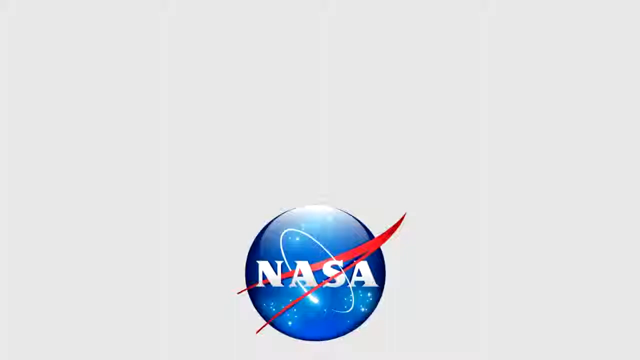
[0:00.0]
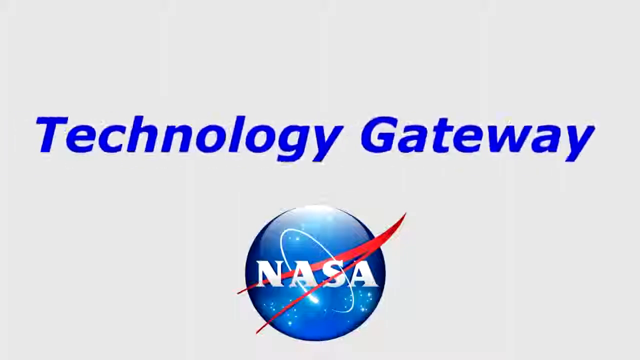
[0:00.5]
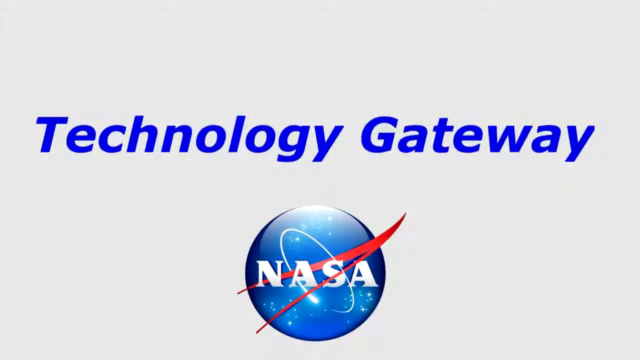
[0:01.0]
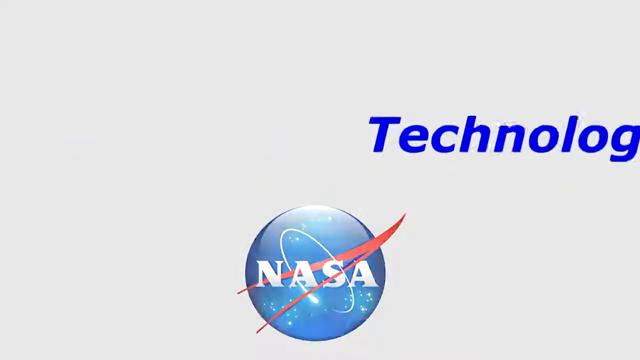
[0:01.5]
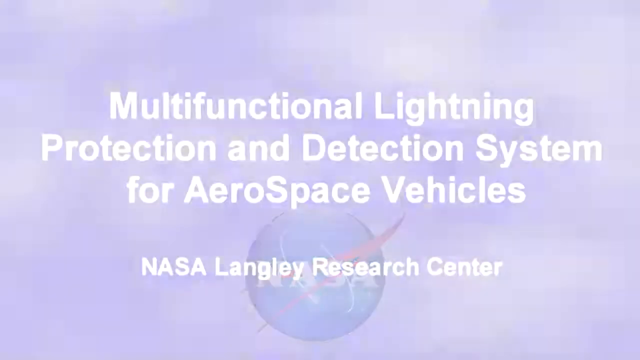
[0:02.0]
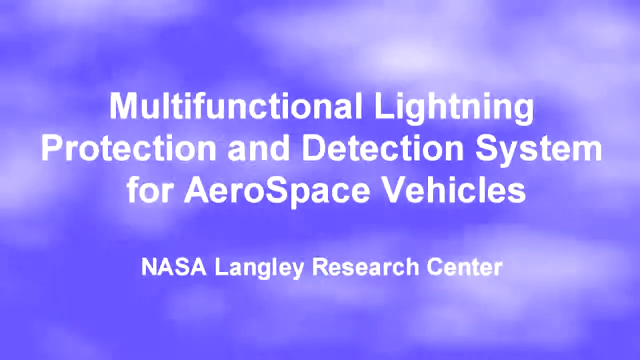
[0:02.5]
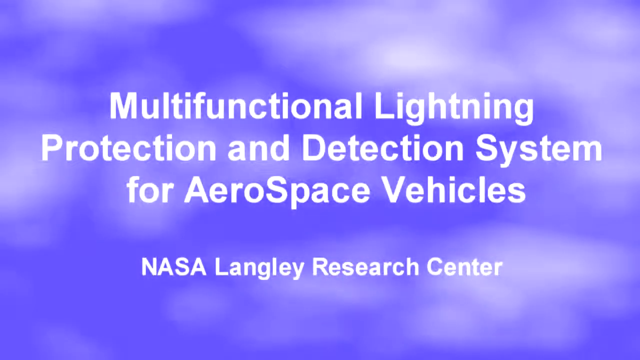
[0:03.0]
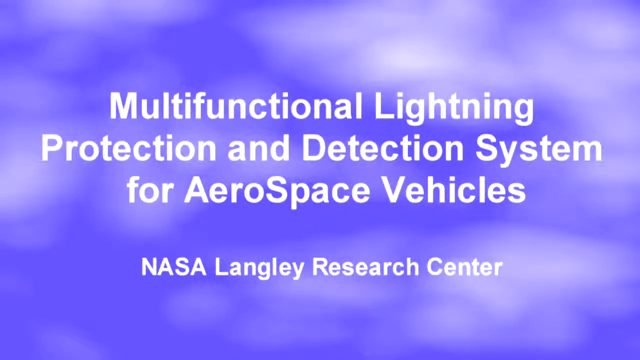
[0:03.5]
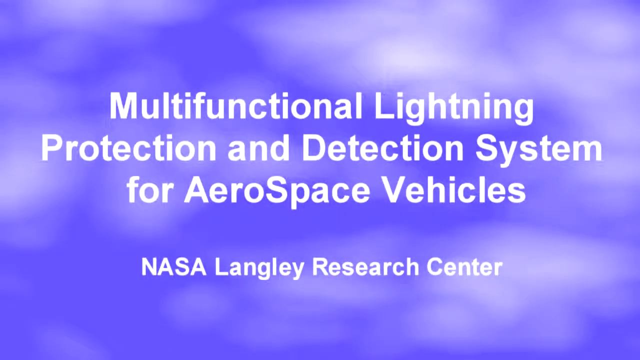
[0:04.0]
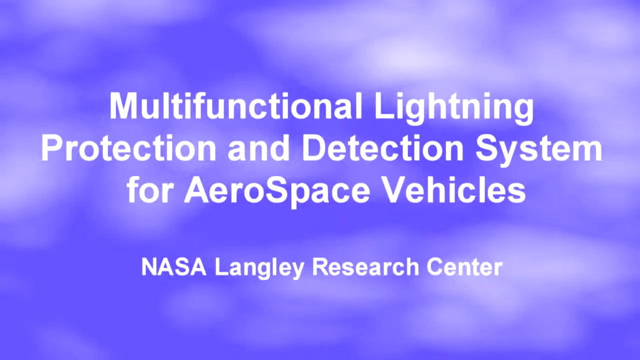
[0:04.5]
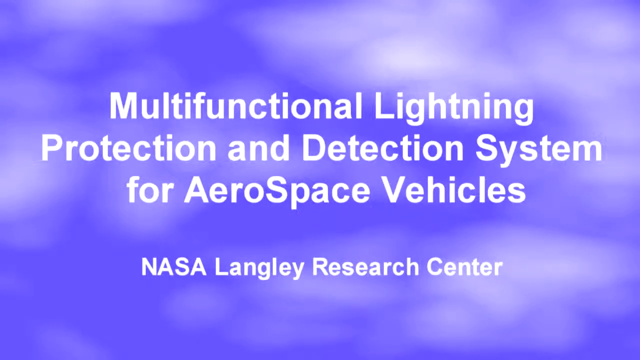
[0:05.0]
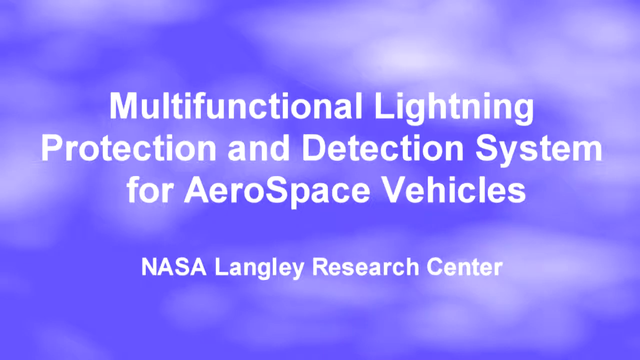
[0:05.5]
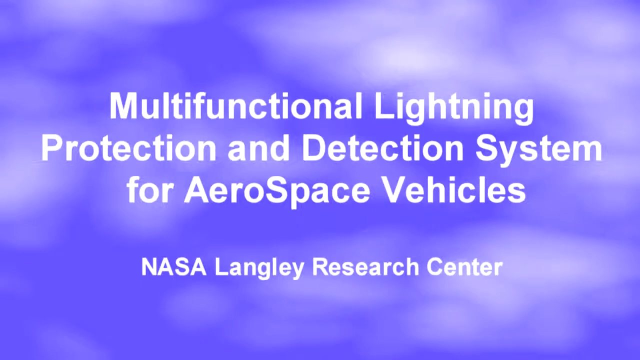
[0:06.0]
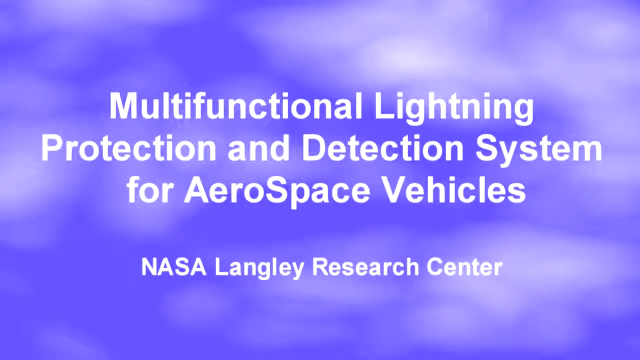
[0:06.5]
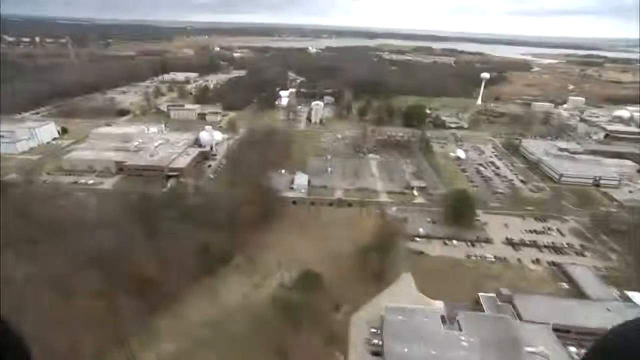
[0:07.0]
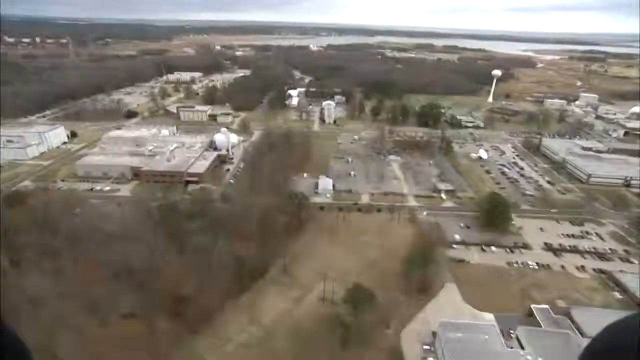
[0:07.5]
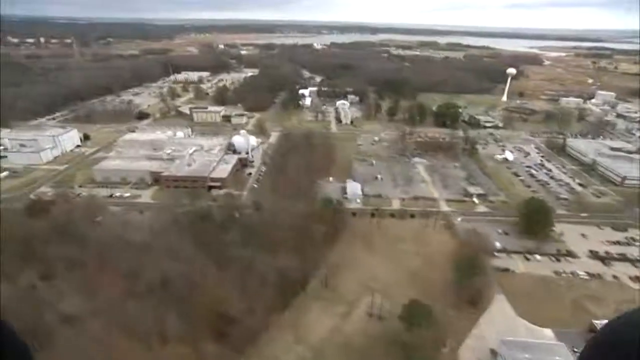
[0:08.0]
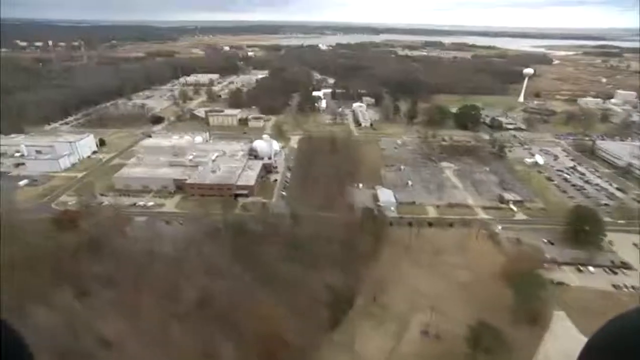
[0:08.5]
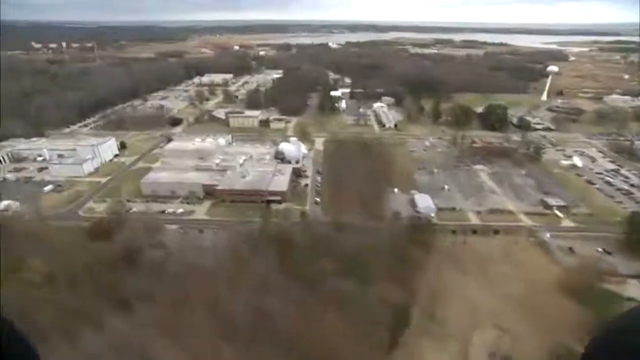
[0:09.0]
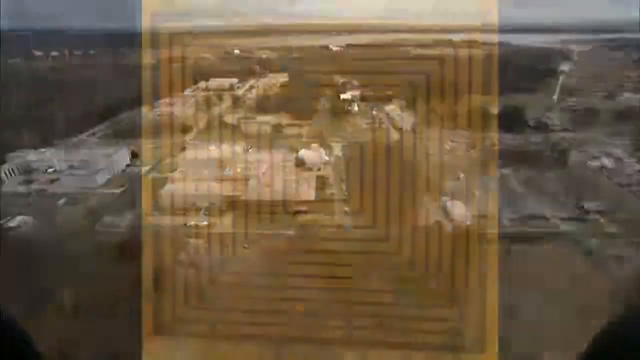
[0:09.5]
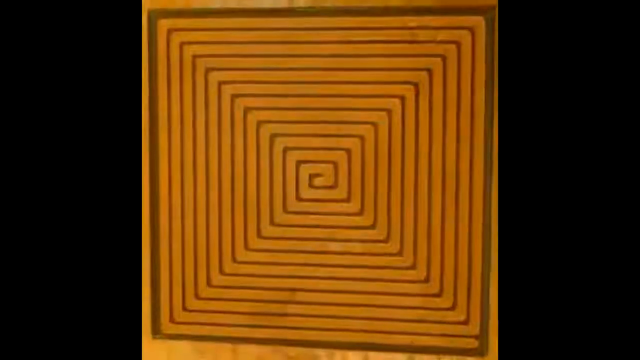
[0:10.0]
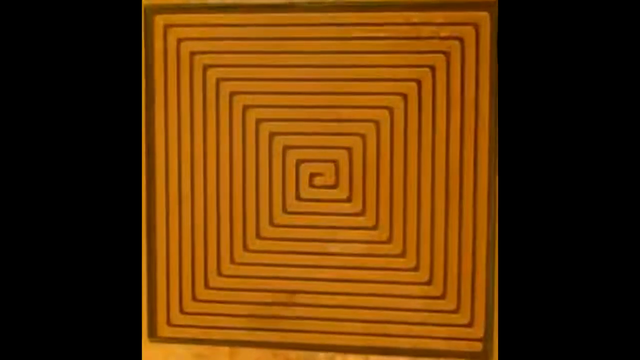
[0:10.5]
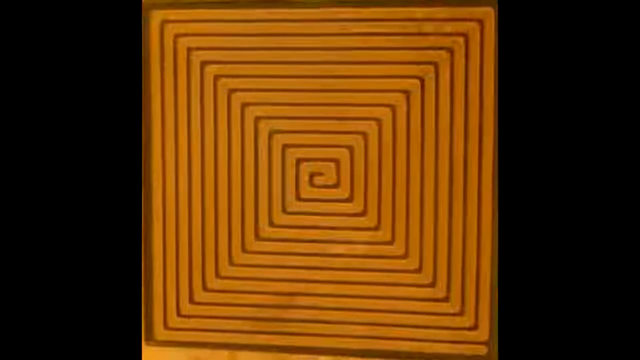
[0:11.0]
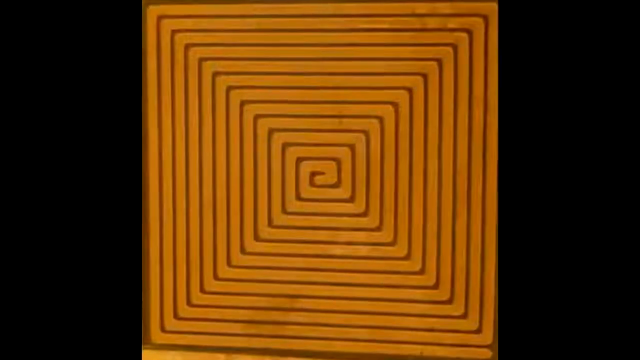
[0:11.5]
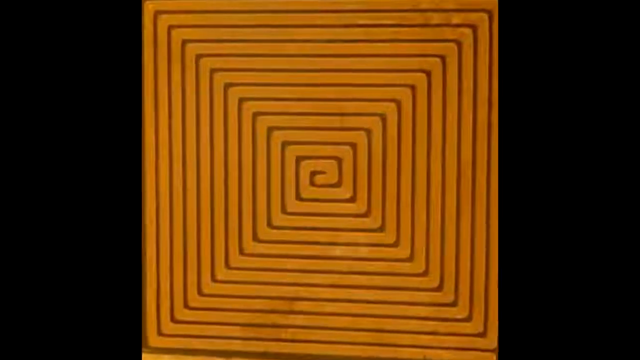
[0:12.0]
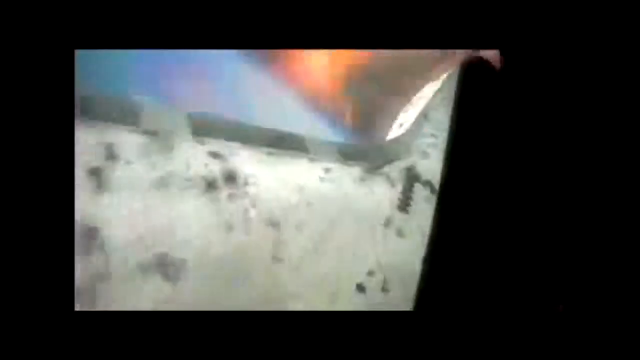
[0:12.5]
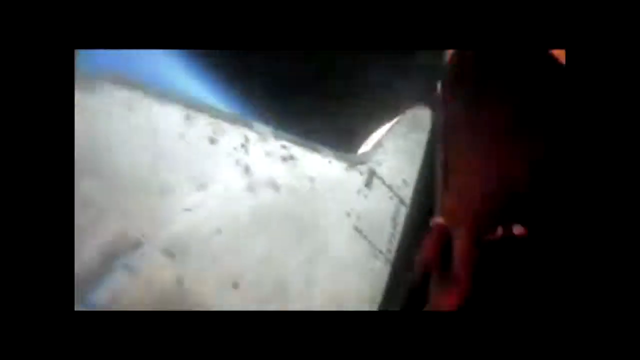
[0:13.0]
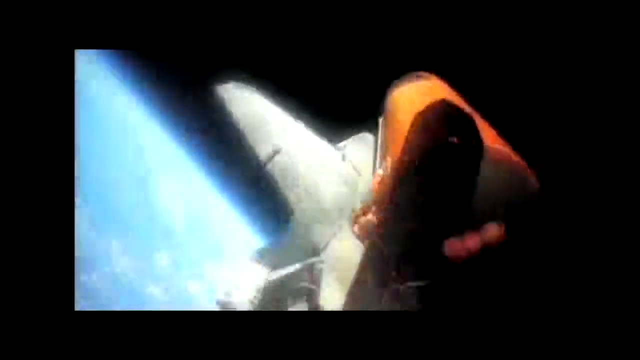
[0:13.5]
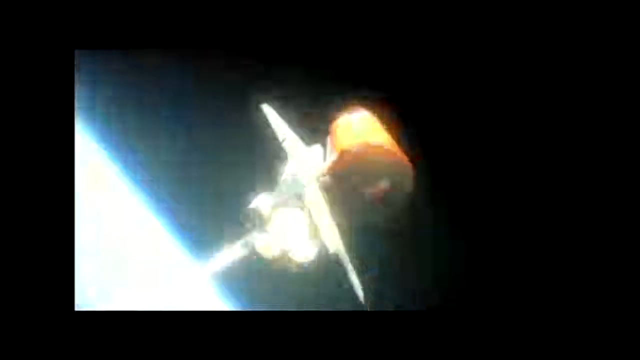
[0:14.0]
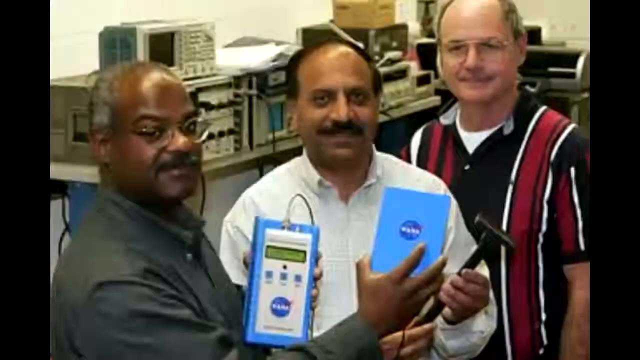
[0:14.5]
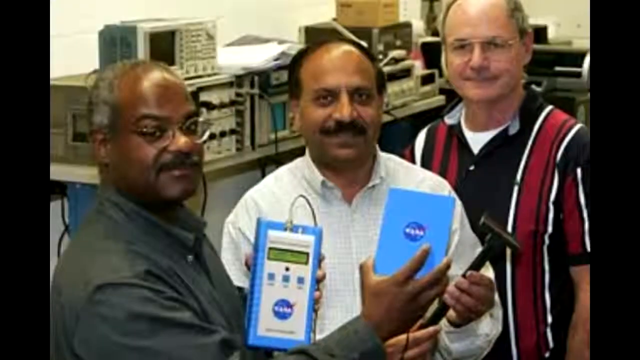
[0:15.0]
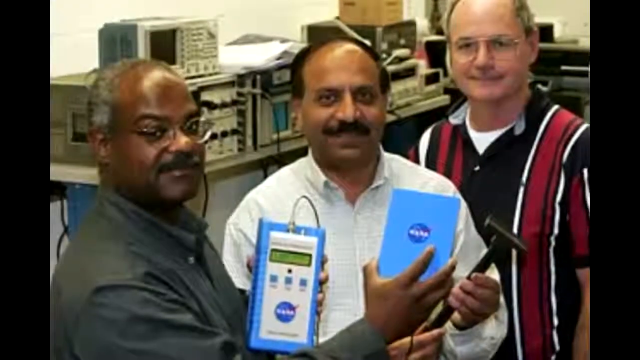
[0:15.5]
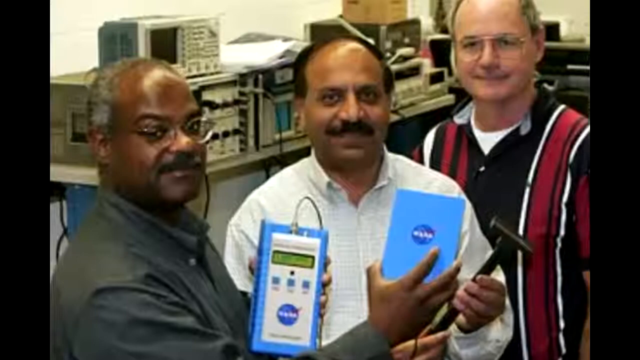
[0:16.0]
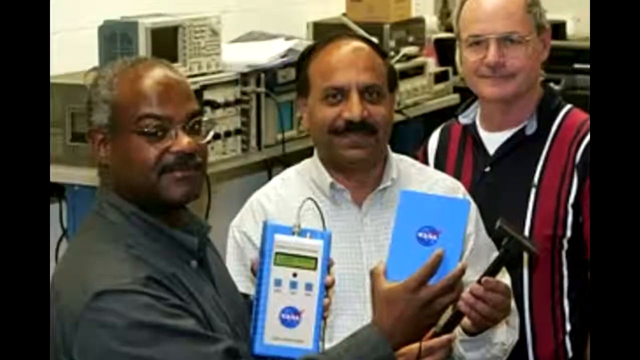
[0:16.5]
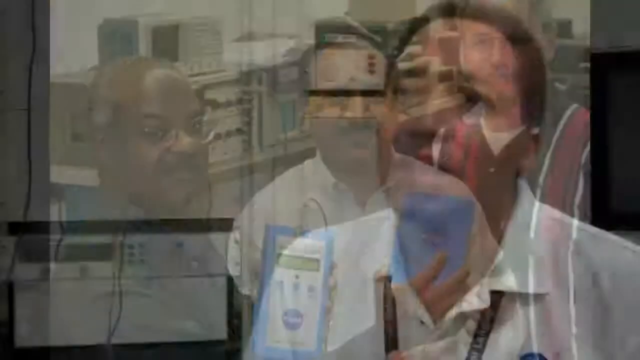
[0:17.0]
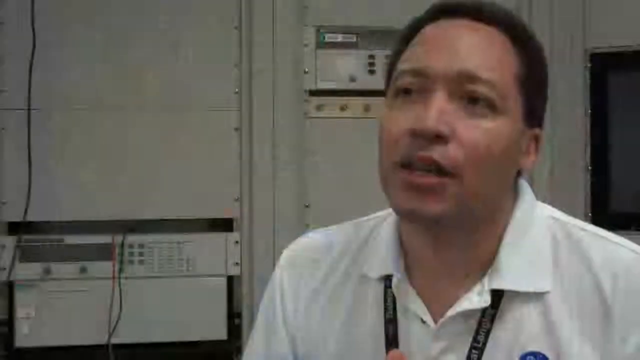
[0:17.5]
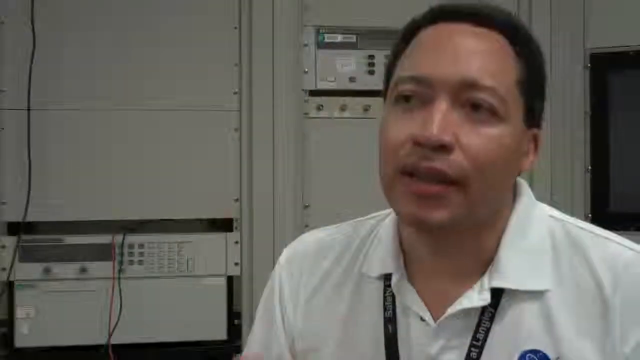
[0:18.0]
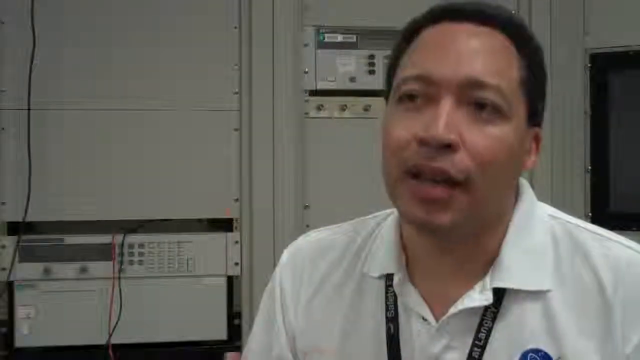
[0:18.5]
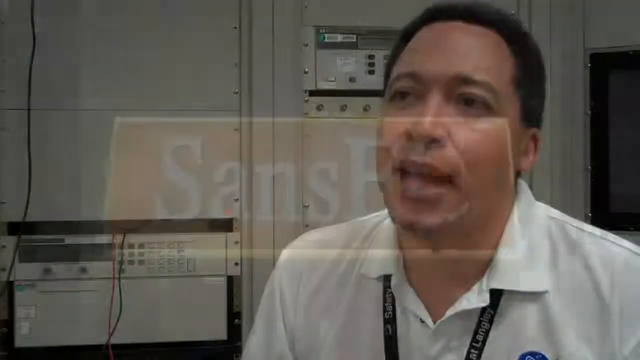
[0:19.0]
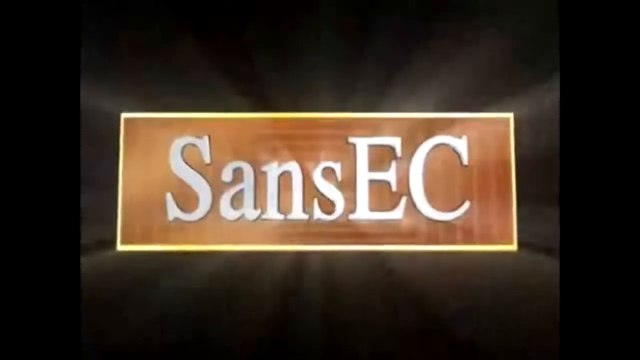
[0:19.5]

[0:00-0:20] The video is introduced as a NASA technology gateway, with the topic being a multifunctional lighting protection and detection system for aerospace vehicles at the Research Center at NASA Langley. Individuals are seen working at NASA on this project and talking about it.